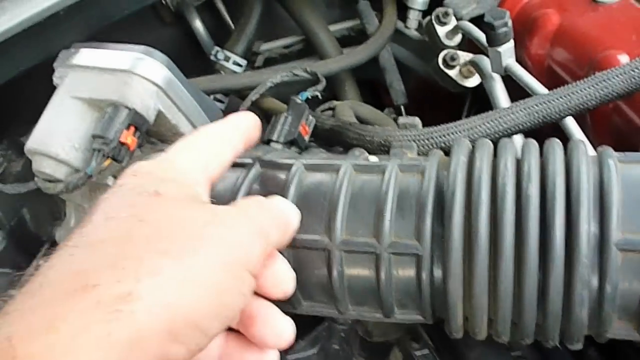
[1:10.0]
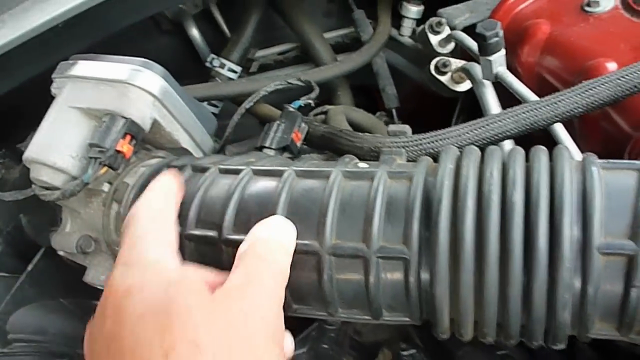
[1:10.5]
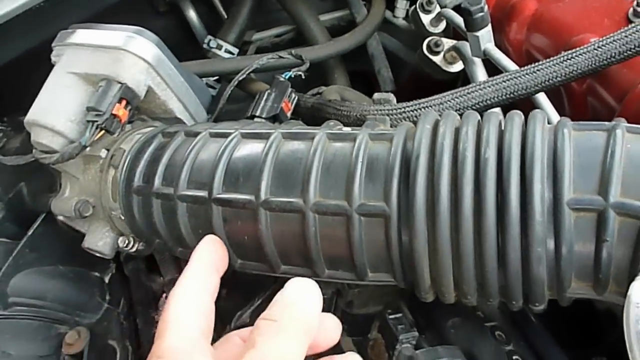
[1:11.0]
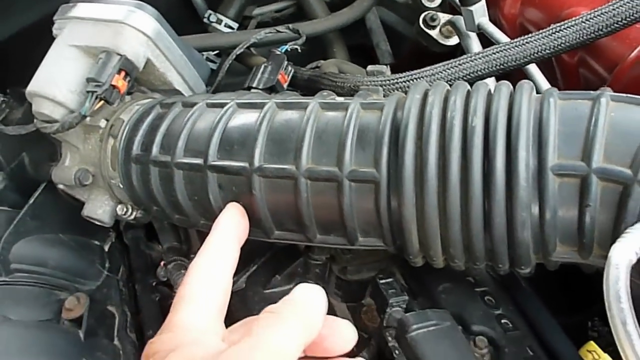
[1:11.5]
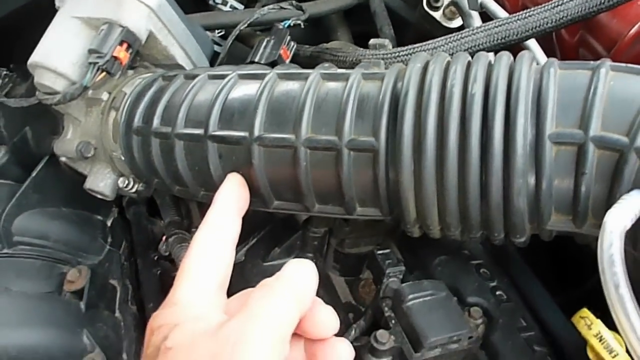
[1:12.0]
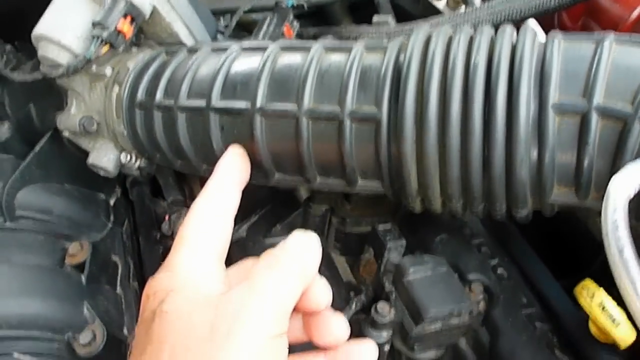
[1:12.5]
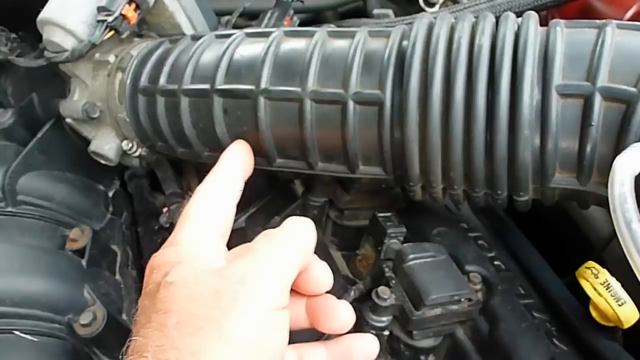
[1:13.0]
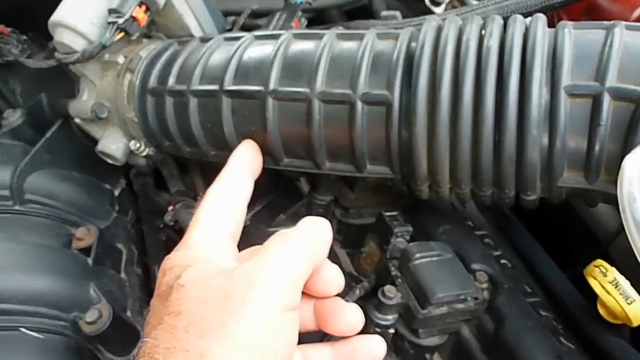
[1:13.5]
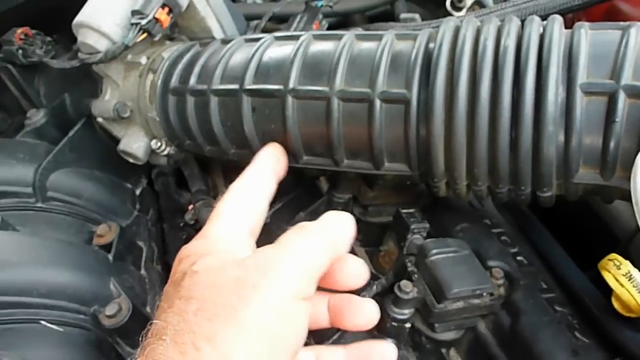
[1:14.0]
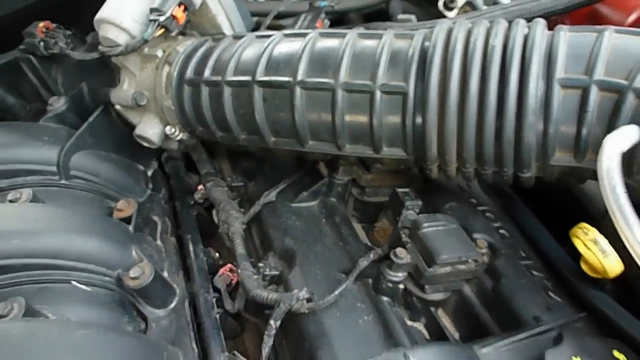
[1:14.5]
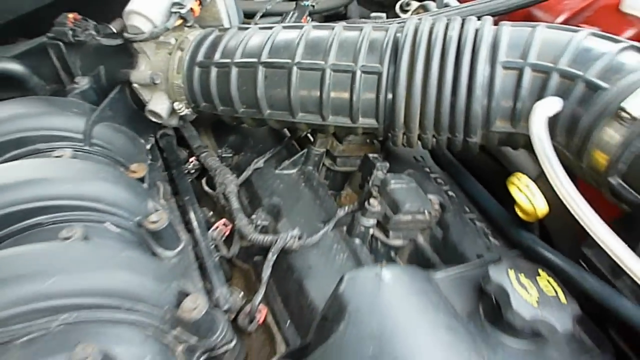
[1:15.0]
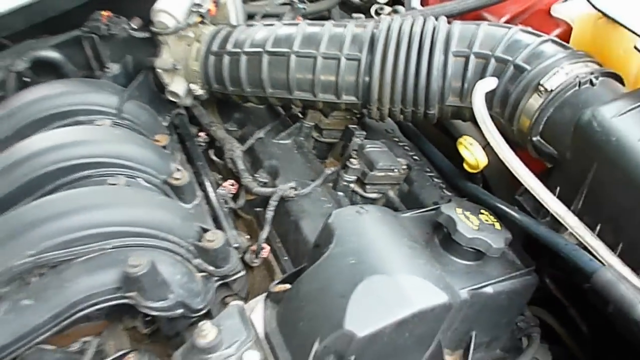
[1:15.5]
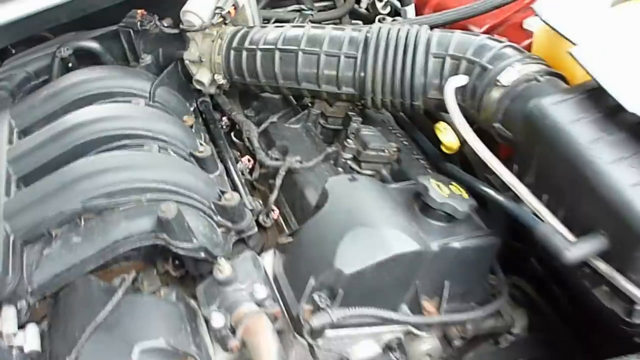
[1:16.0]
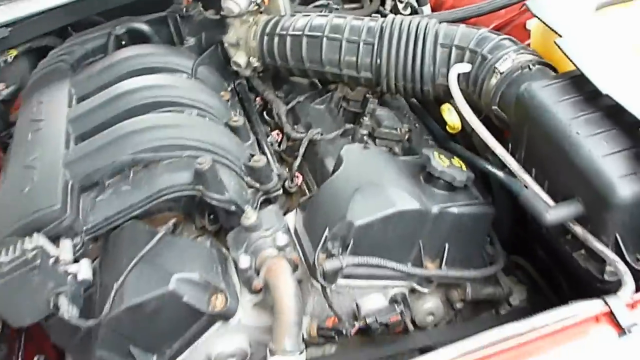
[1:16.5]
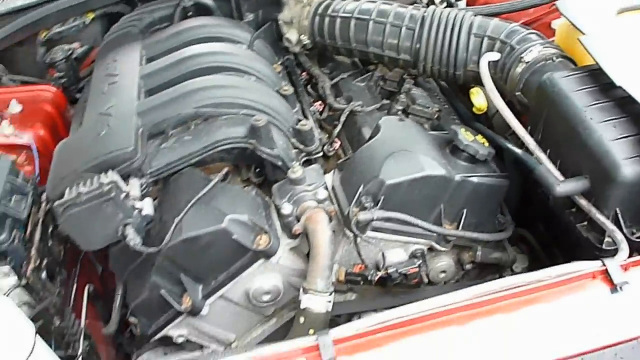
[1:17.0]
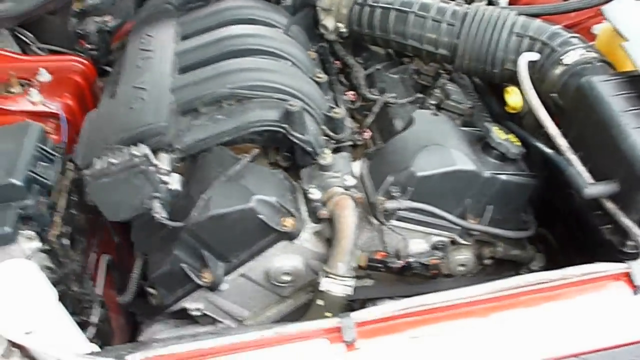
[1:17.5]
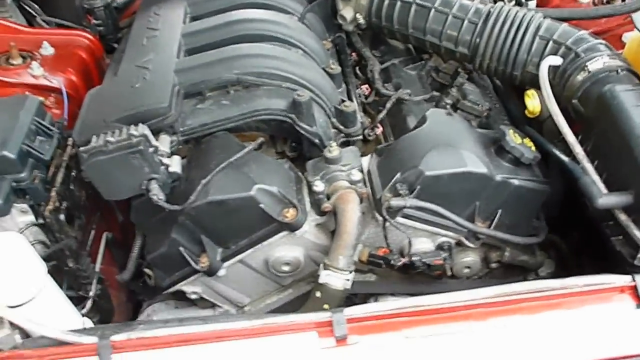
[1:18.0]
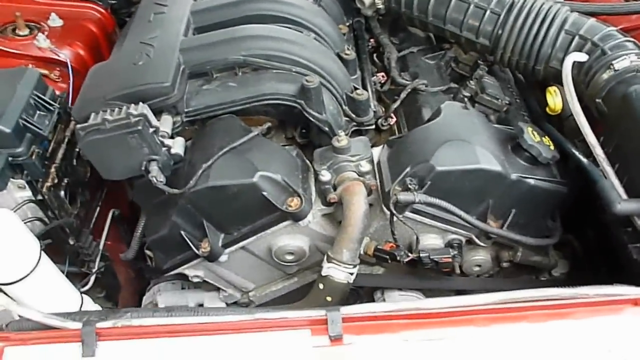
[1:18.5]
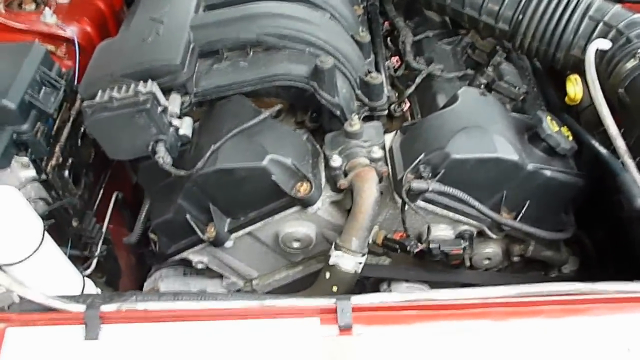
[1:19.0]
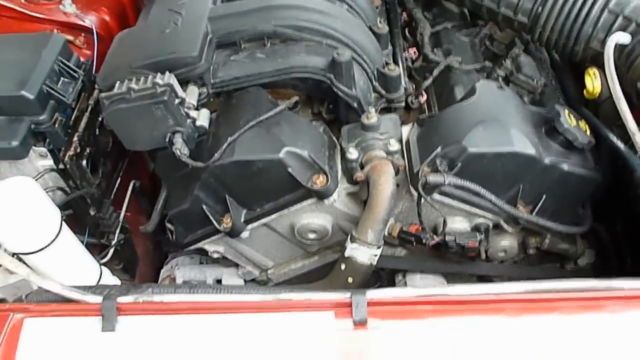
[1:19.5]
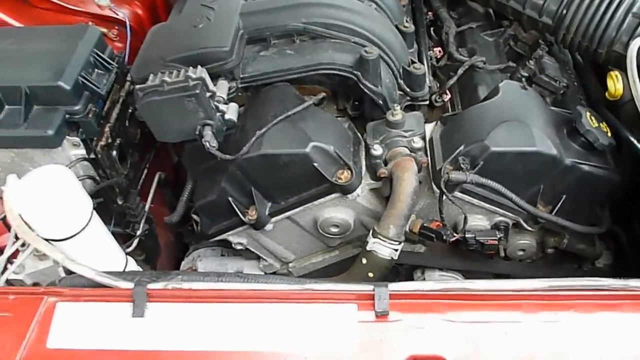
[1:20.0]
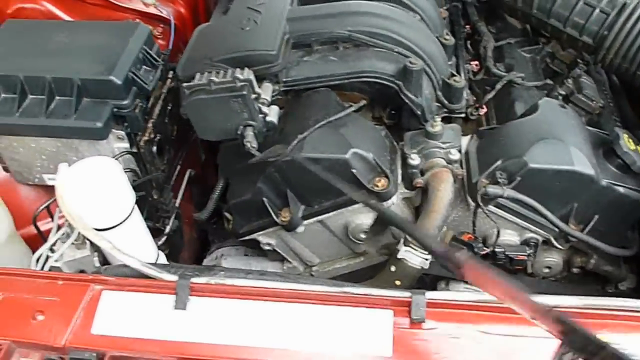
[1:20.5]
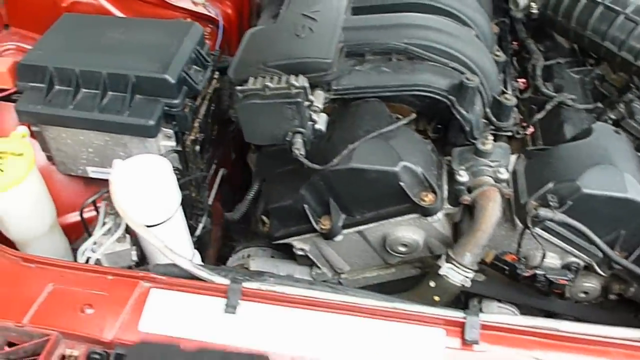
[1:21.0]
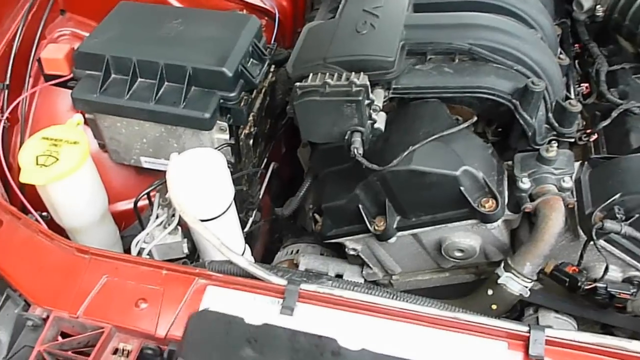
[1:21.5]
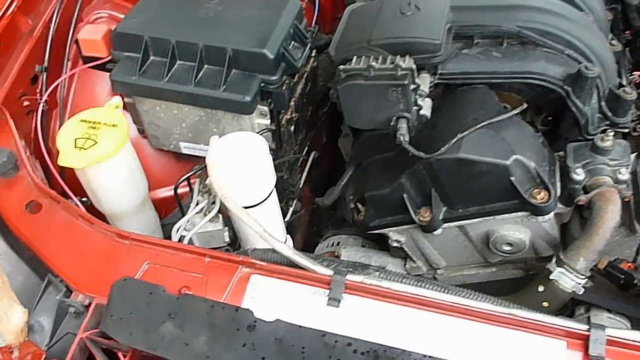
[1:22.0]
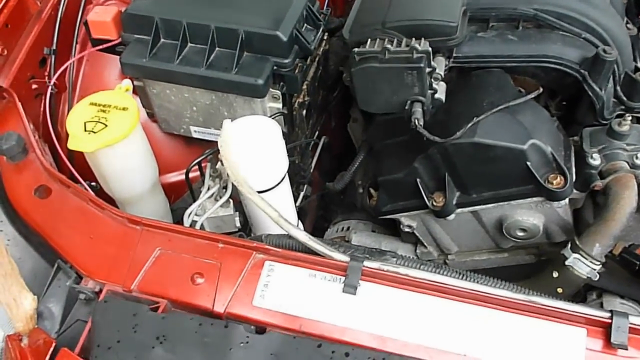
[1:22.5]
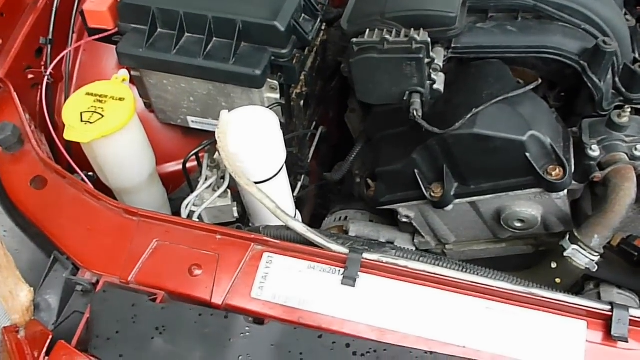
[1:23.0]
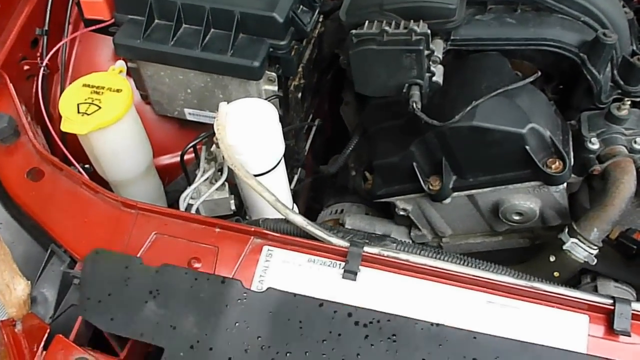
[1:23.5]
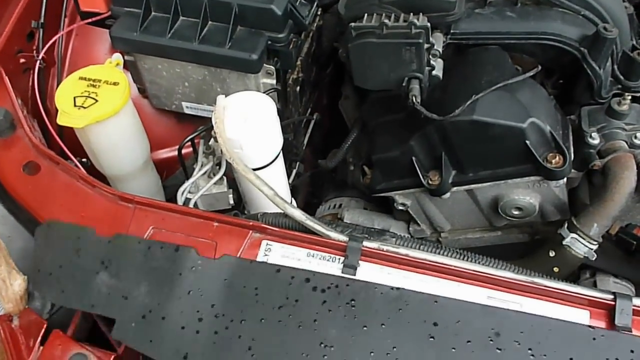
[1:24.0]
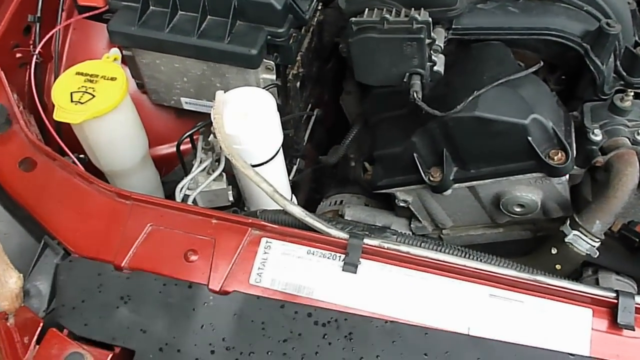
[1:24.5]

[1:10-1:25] The man points at the large black tubing again; it has several plastic ribs built into it. He does nothing to the vehicle besides pointing things out, so the generator has apparently already been installed. He then takes the black panel that overlays the thin compartment on the left front of the car, right behind the grille, and puts it back in place. He seems methodical in his hand placements.